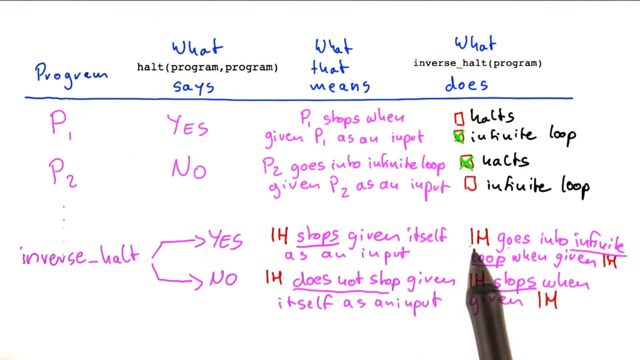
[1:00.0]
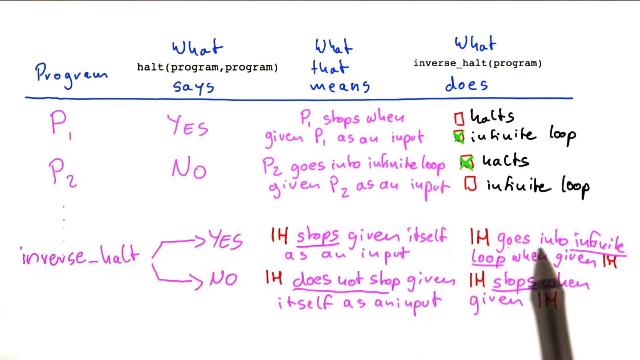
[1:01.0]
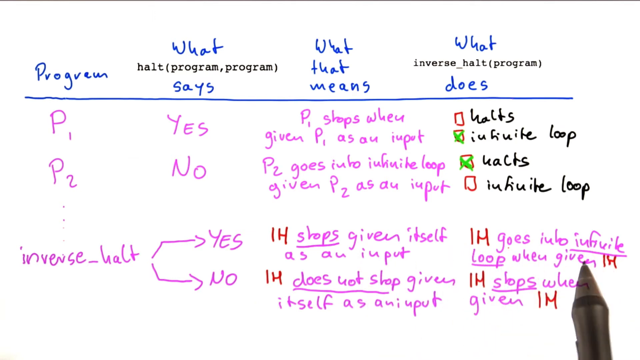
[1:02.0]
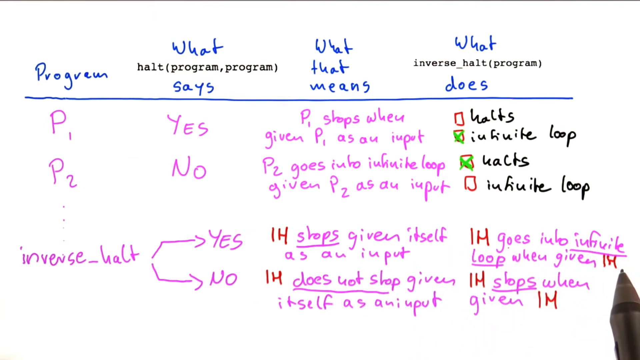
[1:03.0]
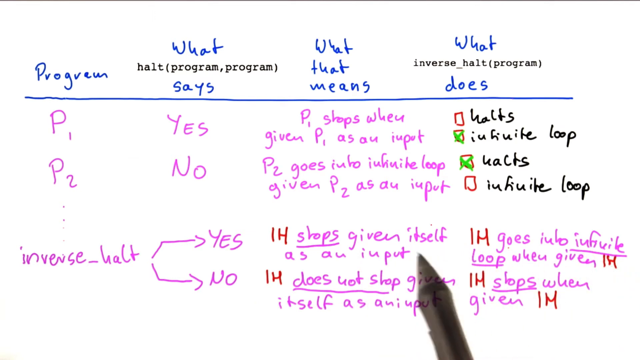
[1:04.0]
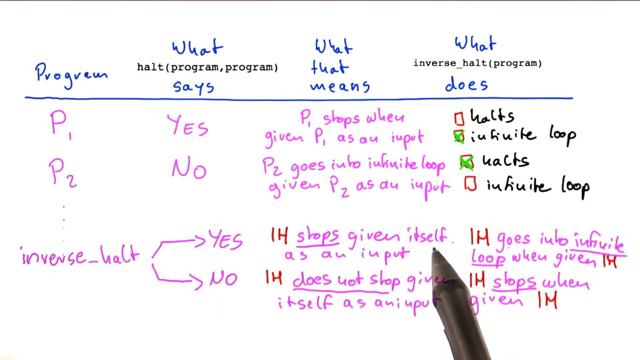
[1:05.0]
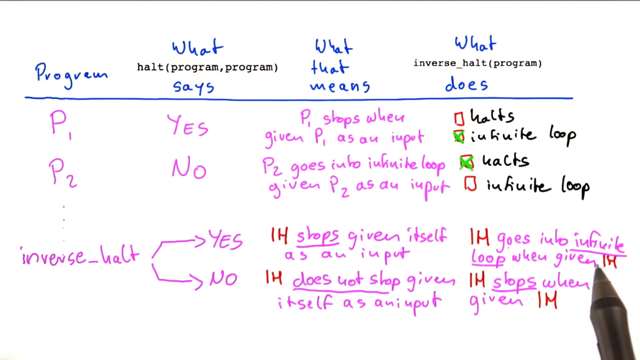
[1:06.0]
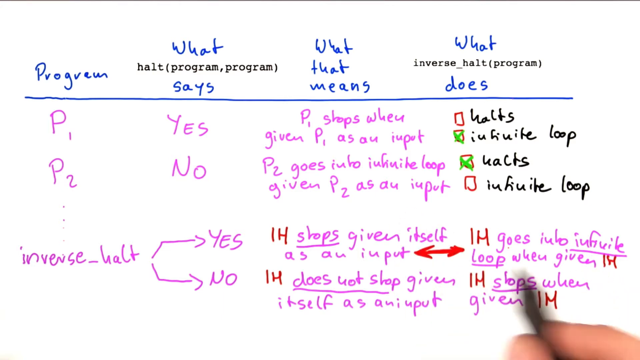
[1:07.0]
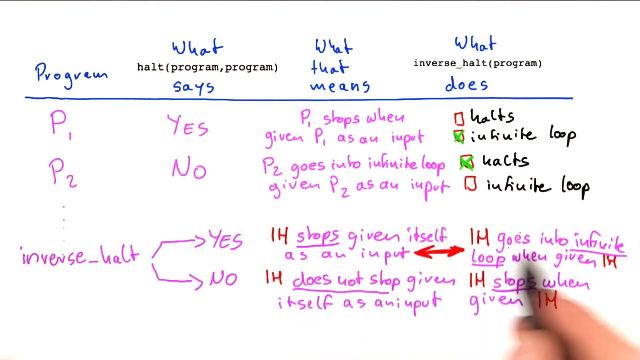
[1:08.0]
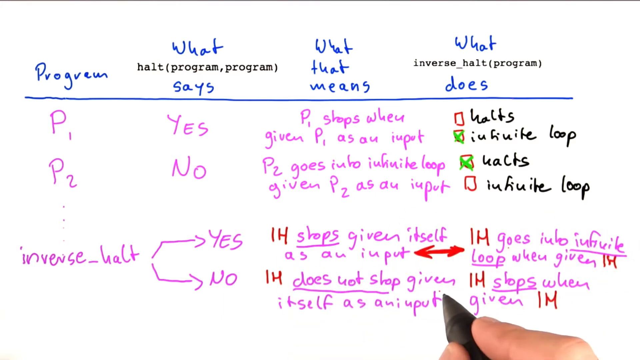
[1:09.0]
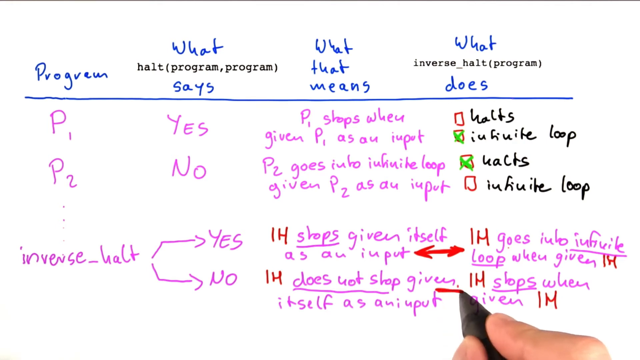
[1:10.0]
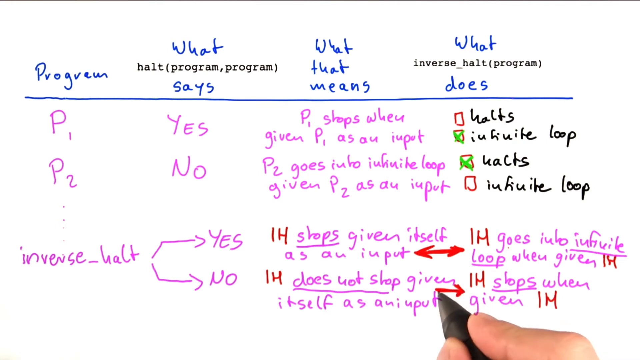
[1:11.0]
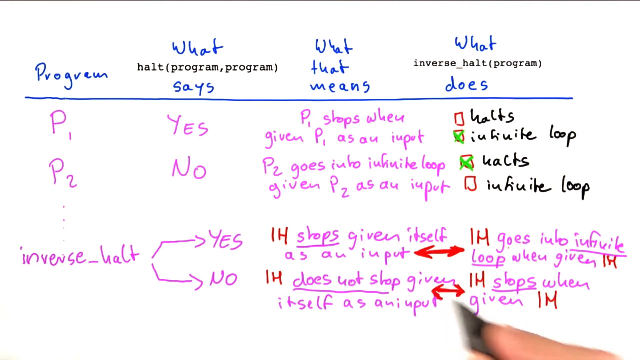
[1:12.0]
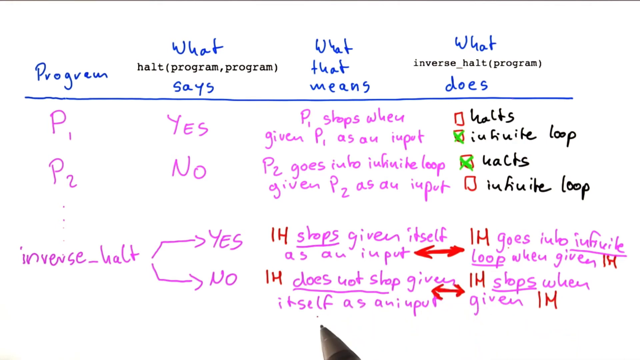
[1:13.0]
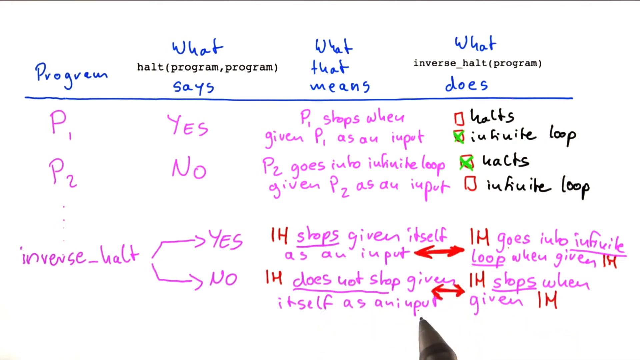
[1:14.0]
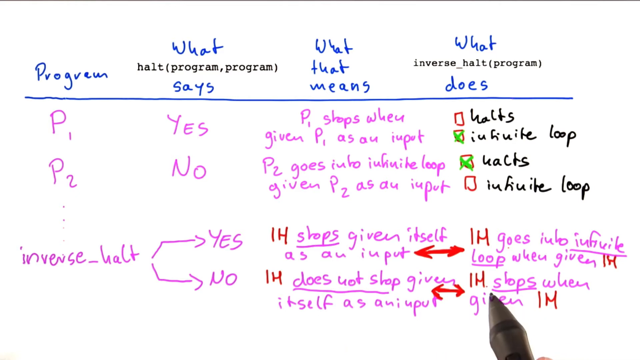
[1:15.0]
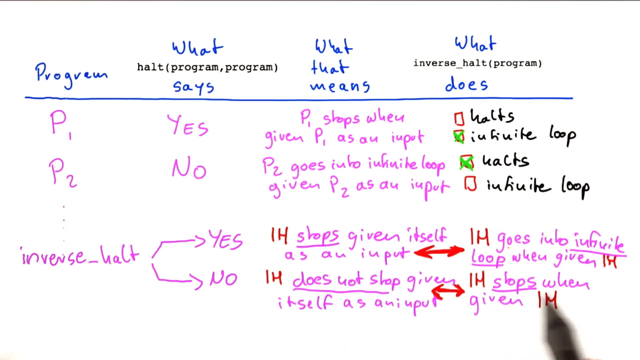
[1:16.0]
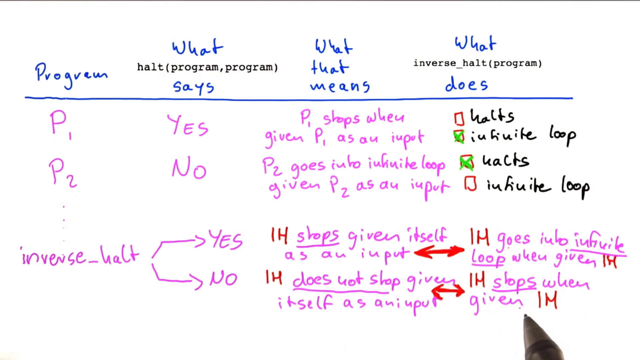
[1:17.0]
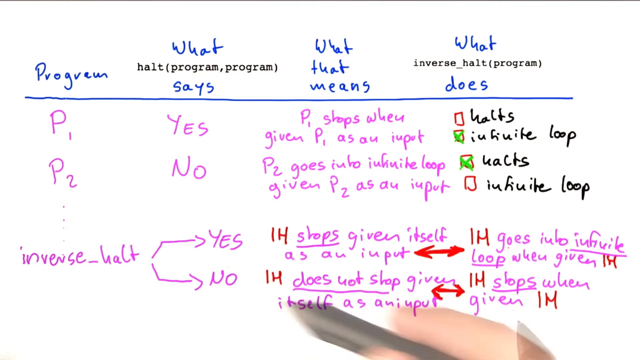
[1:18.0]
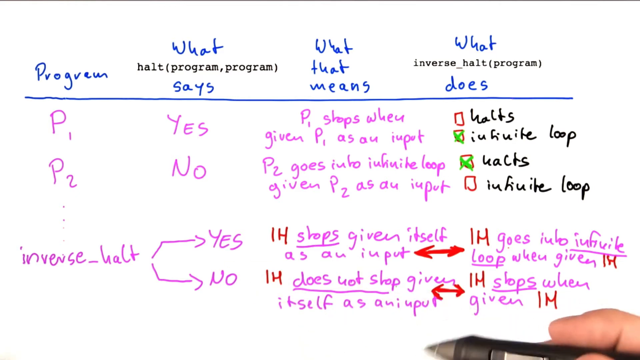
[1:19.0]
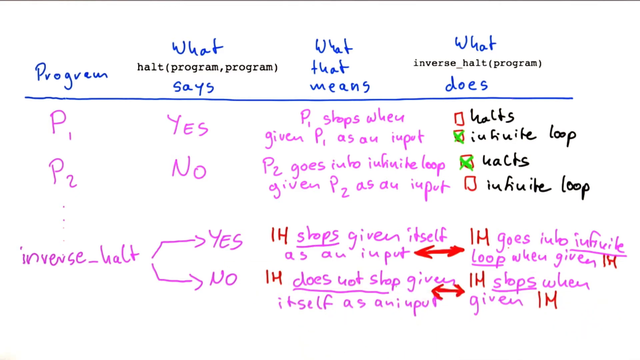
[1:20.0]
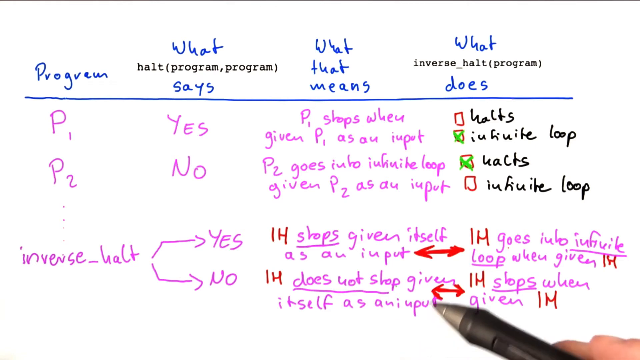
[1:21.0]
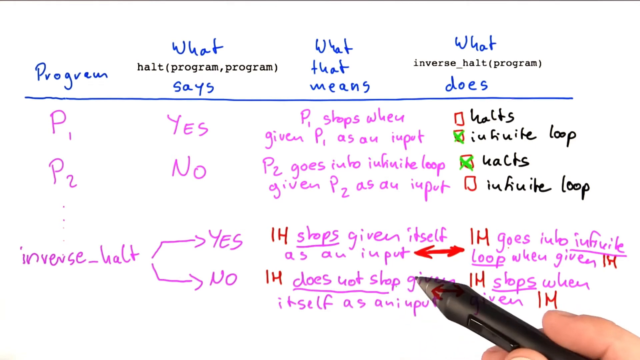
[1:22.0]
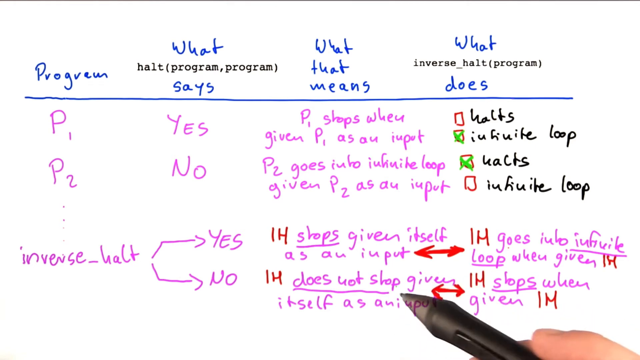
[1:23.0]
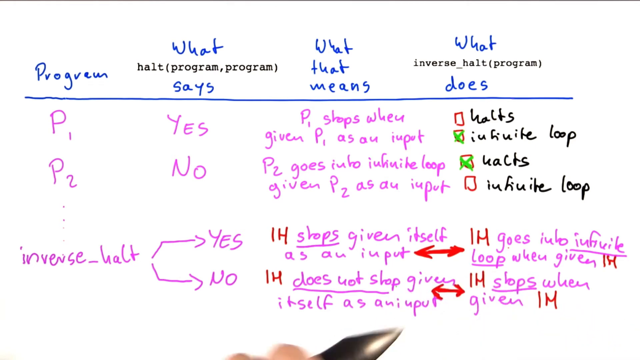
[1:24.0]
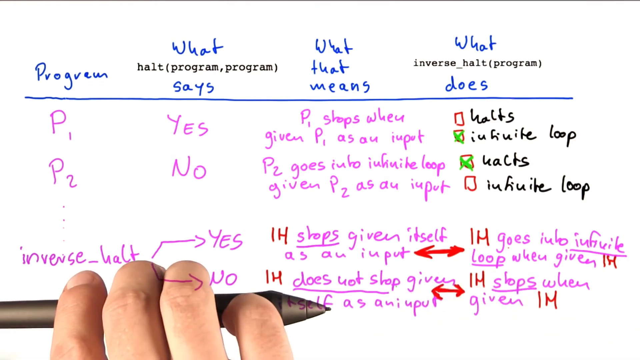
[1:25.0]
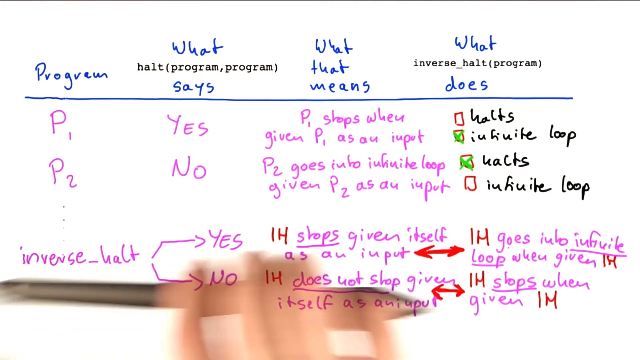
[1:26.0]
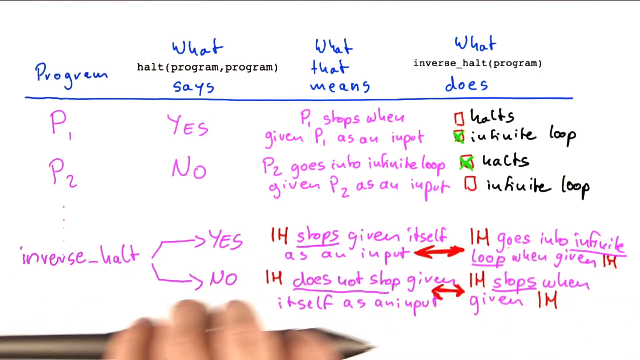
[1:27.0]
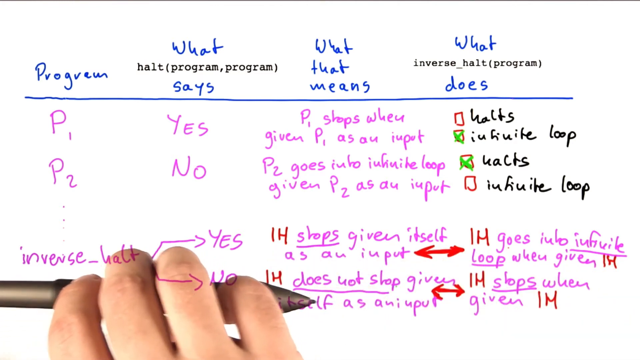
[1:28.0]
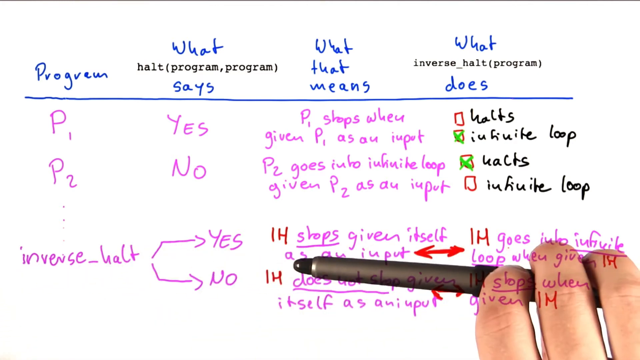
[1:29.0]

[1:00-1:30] A whiteboard is being marked on. A blue section at the top has a line going across, with four sections above it: "program" with p1 and p2 under it, "what says" with yes or no below, "what that means" with details below, and "what does", which is just halts or infinite loop. Below this, under program, is inverse_halt with yes or no: for yes, "IH stops given itself as input", and for no, "IH does not stop given itself as input". Under what it does, yes has "IH goes into infinite loop when given IH" and no has "IH stops when given IH". The person underlines various parts, including the last category. He draws a red arrow back and forth, left and right, between "what that means" and "what does" for the inverse halt yes row, and does the same for the inverse halt no row. He then puts his pen against the whiteboard and moves it from left to right and back, apparently showing the direction.